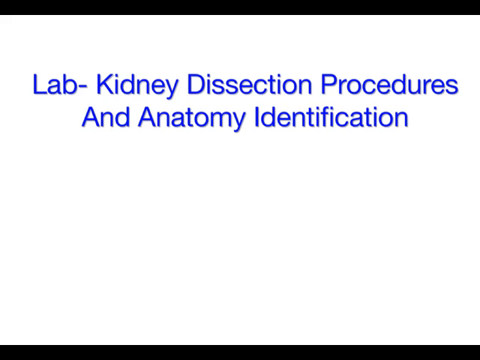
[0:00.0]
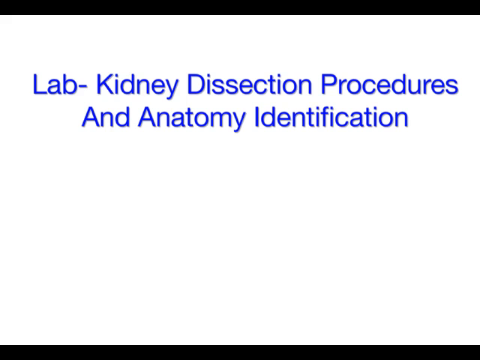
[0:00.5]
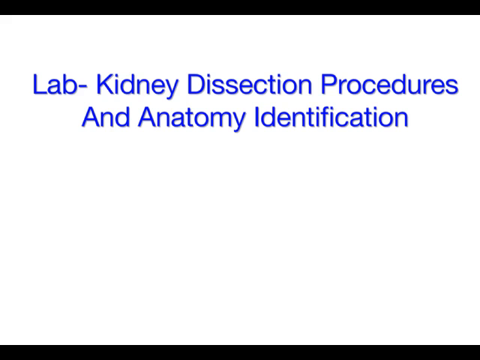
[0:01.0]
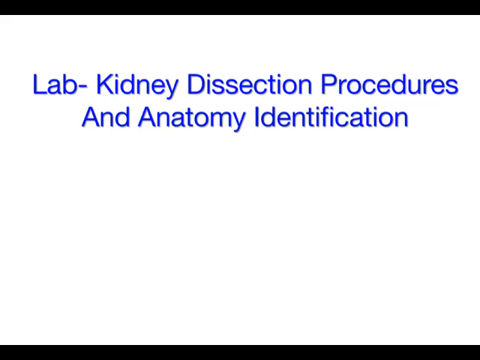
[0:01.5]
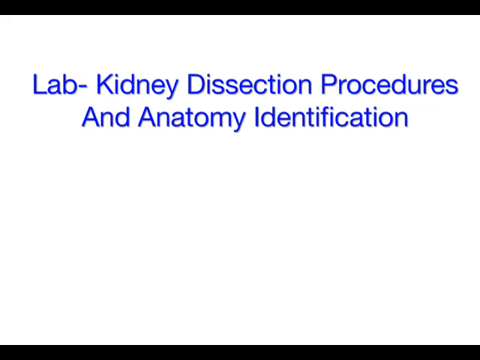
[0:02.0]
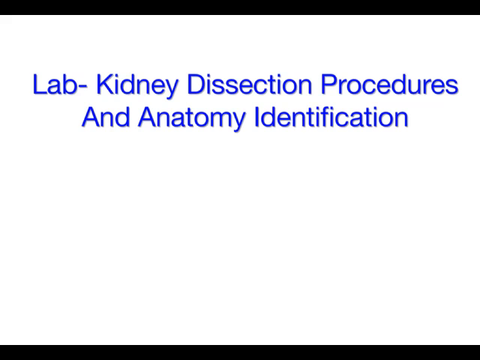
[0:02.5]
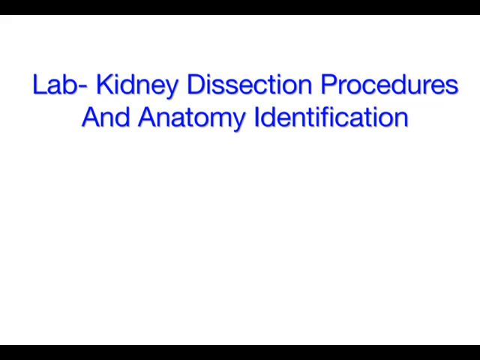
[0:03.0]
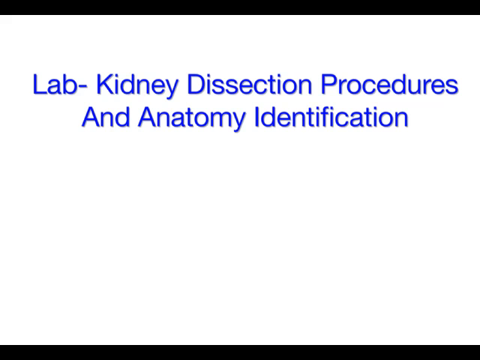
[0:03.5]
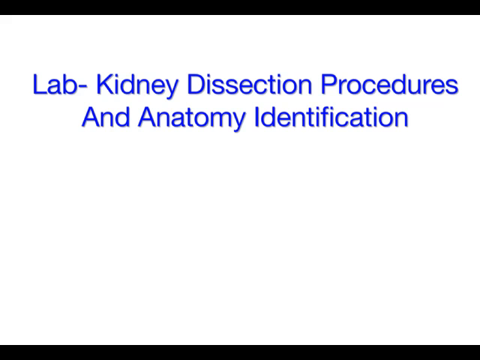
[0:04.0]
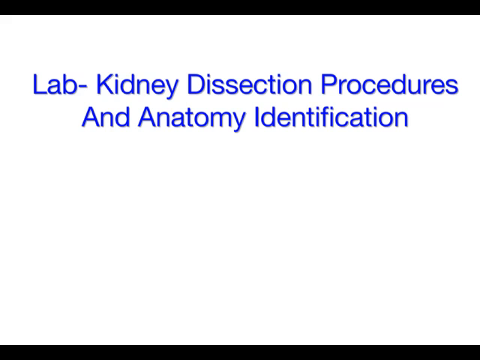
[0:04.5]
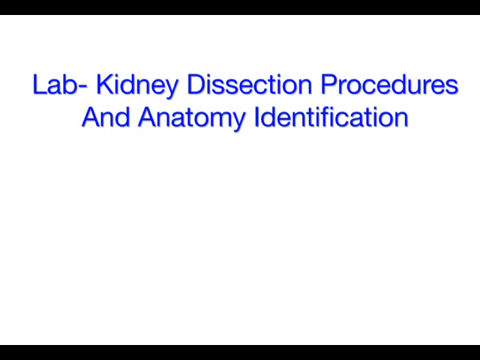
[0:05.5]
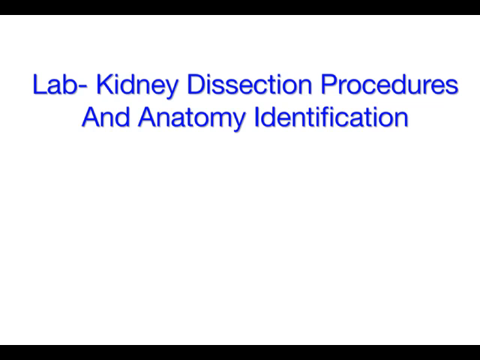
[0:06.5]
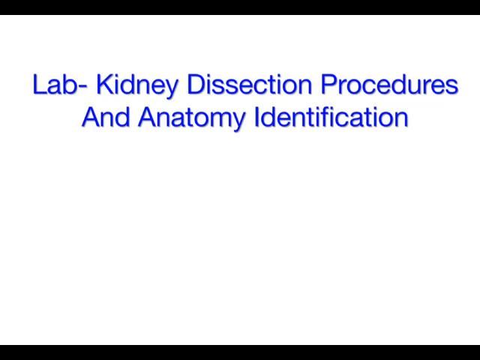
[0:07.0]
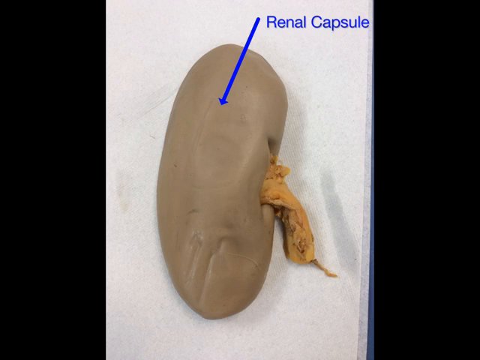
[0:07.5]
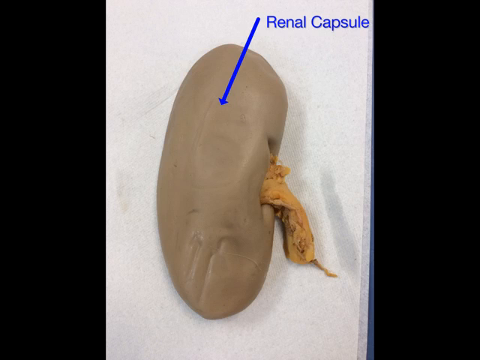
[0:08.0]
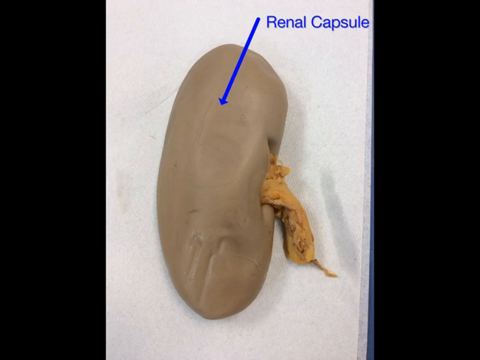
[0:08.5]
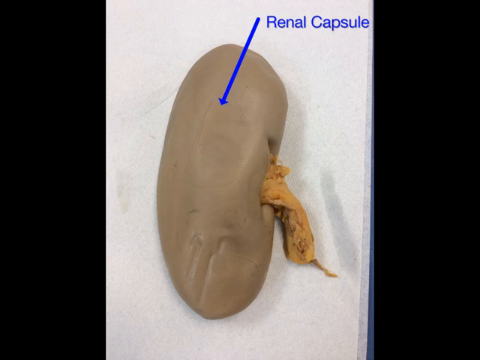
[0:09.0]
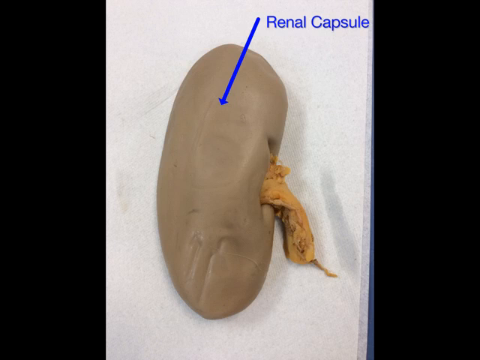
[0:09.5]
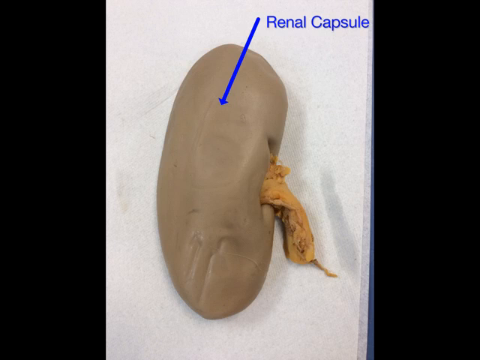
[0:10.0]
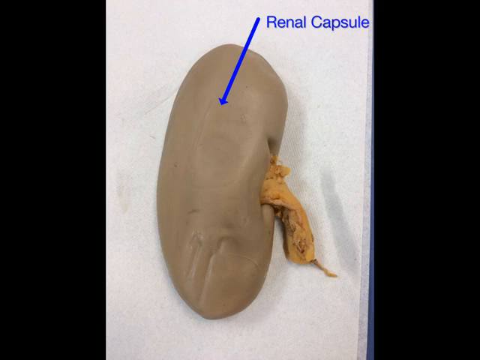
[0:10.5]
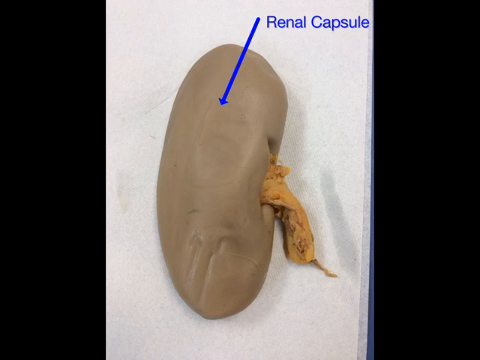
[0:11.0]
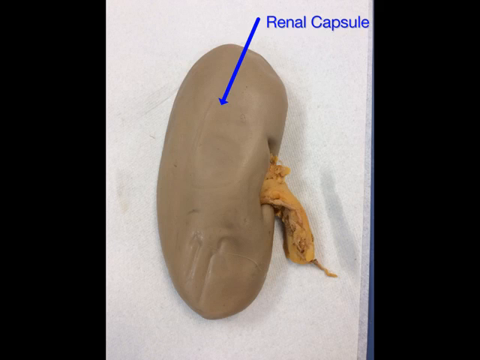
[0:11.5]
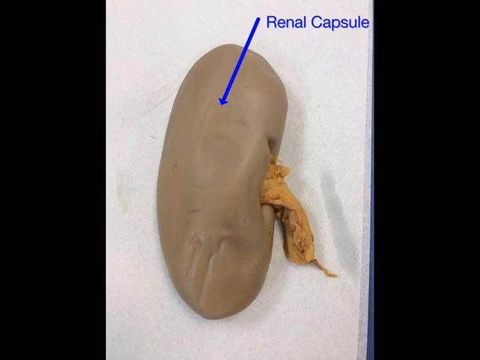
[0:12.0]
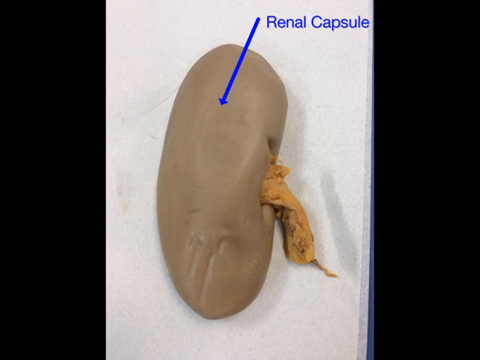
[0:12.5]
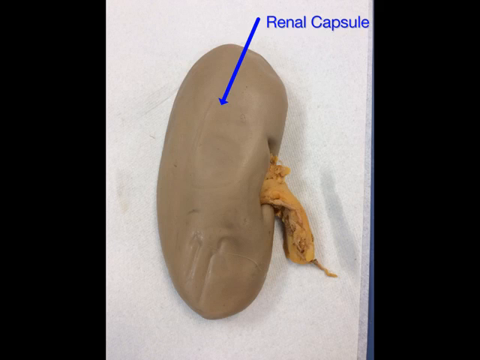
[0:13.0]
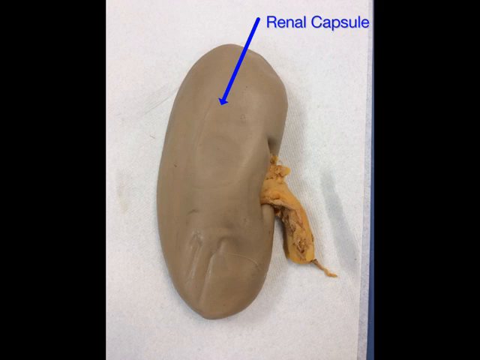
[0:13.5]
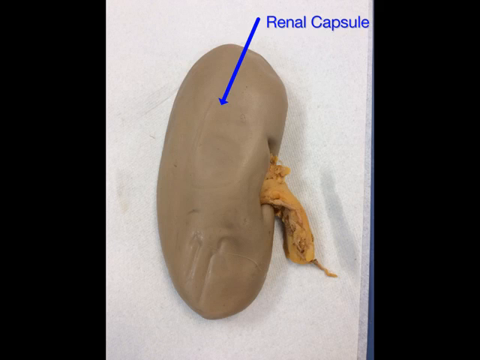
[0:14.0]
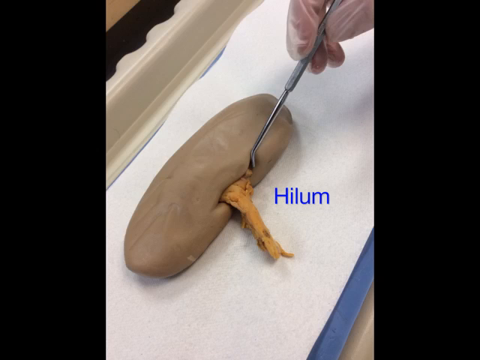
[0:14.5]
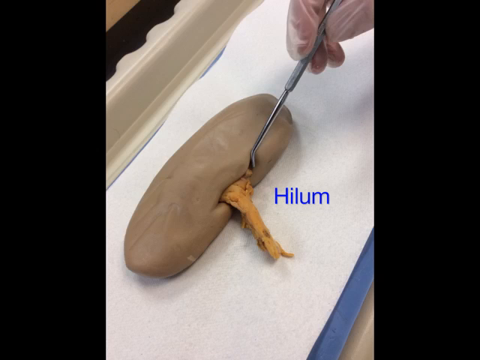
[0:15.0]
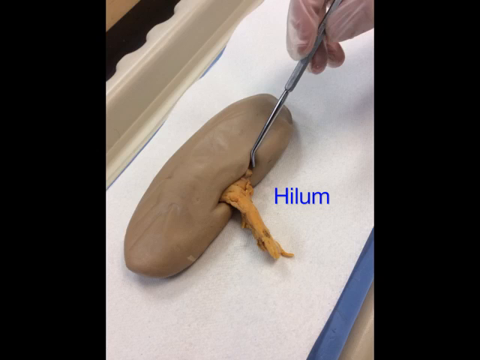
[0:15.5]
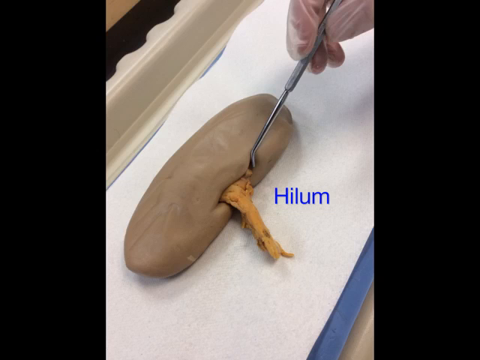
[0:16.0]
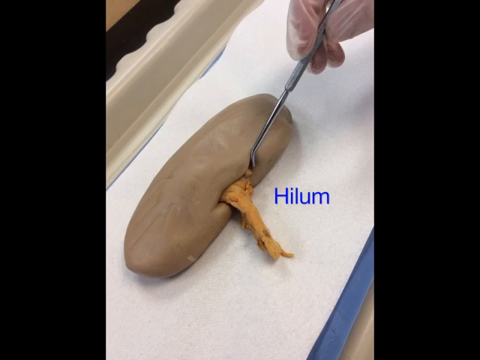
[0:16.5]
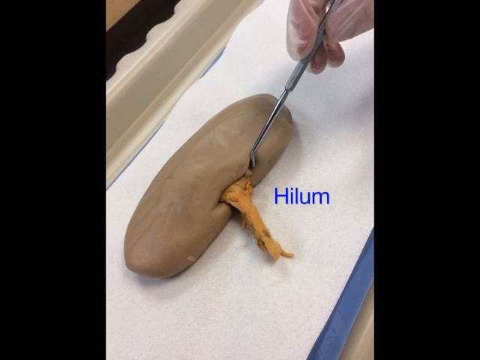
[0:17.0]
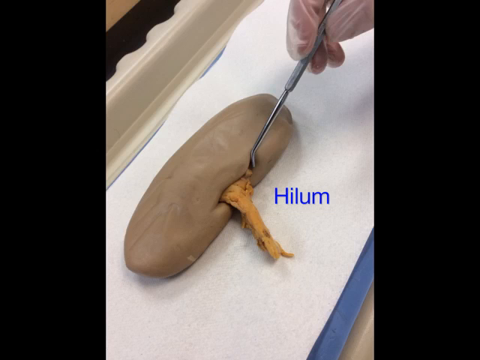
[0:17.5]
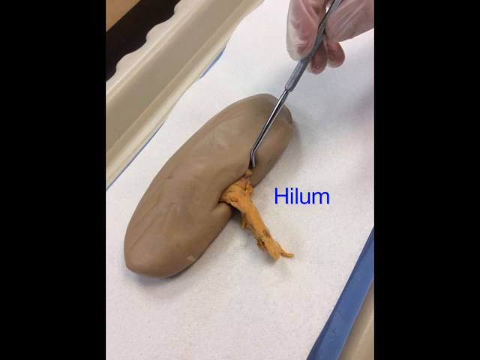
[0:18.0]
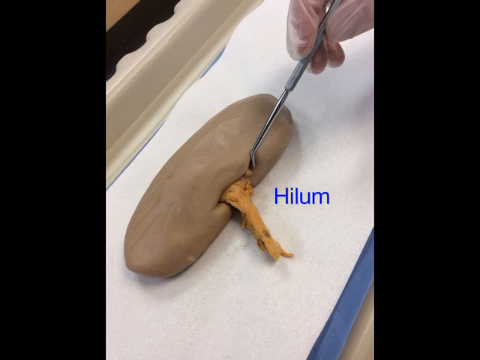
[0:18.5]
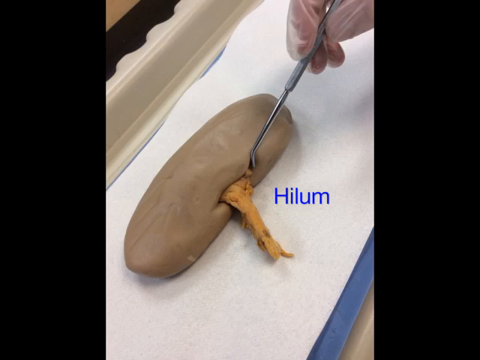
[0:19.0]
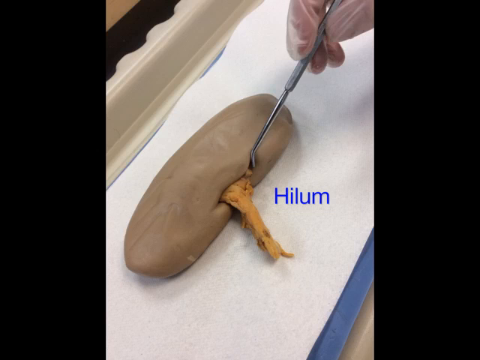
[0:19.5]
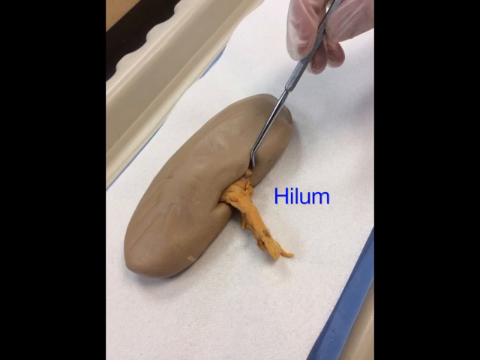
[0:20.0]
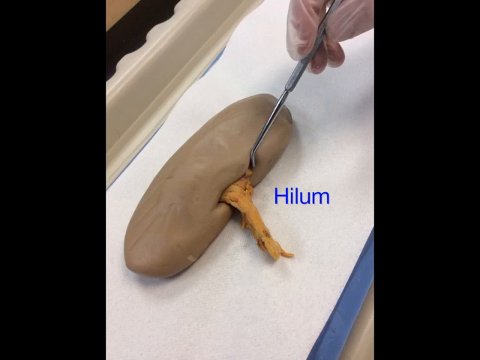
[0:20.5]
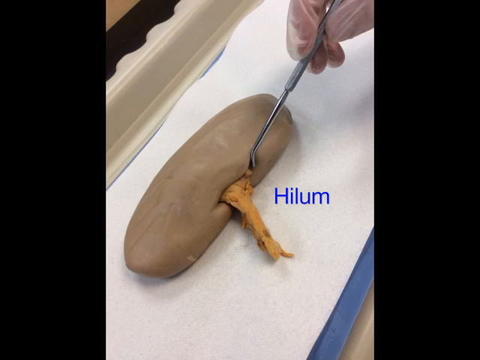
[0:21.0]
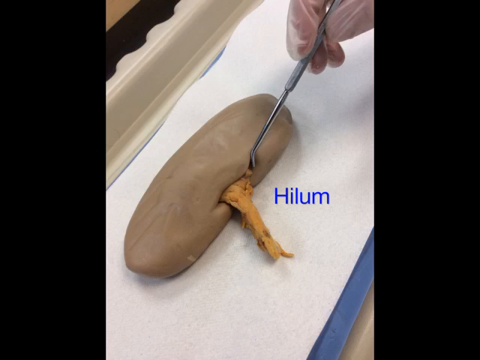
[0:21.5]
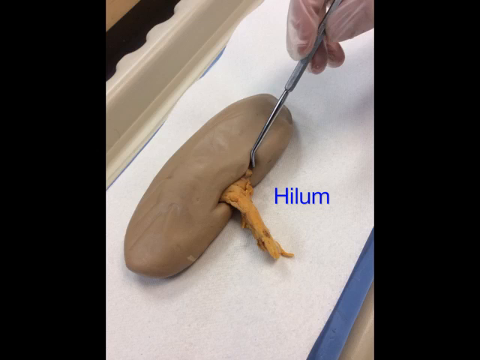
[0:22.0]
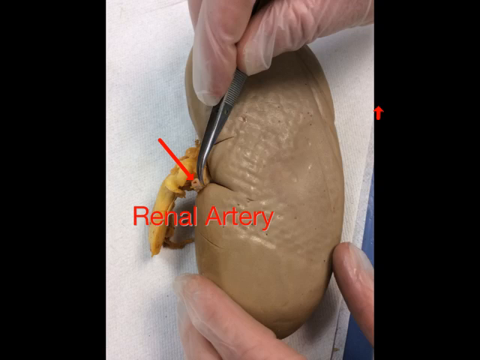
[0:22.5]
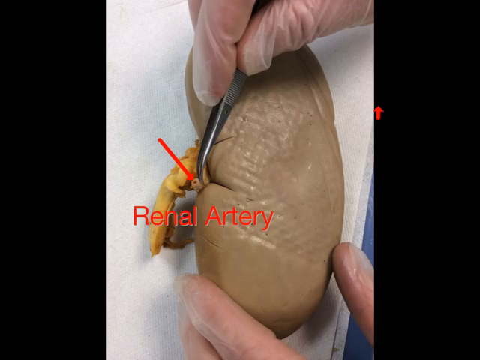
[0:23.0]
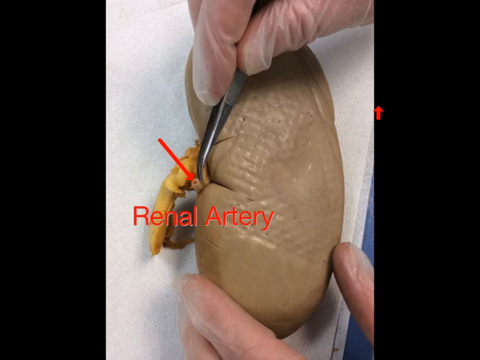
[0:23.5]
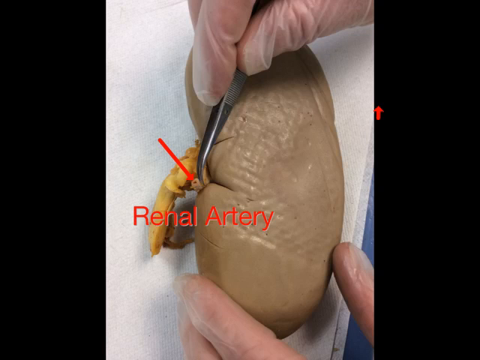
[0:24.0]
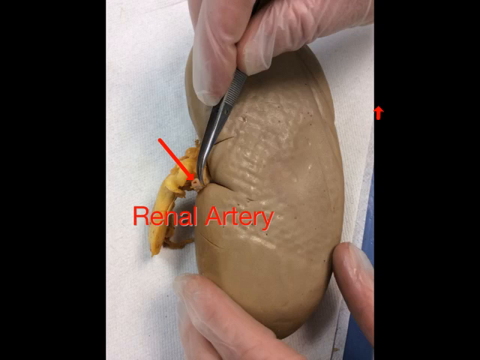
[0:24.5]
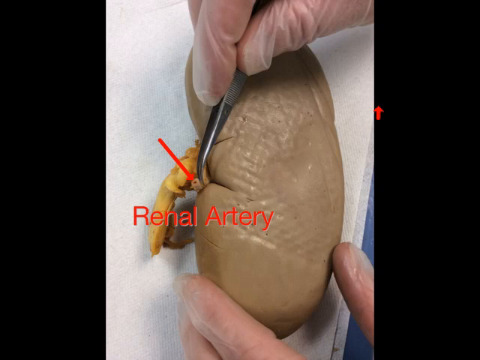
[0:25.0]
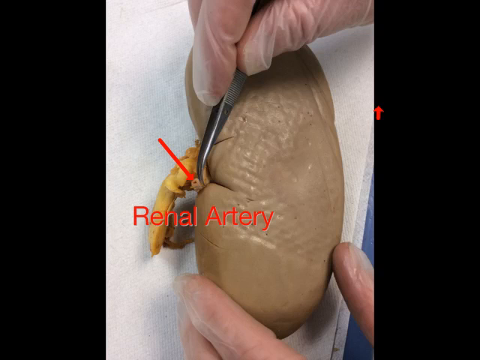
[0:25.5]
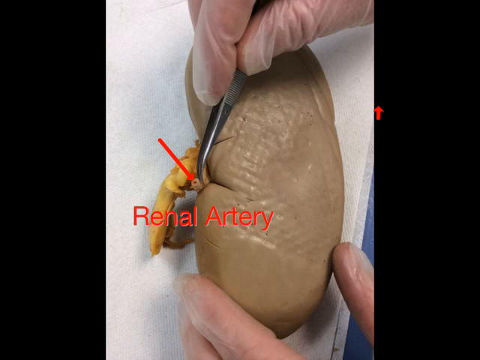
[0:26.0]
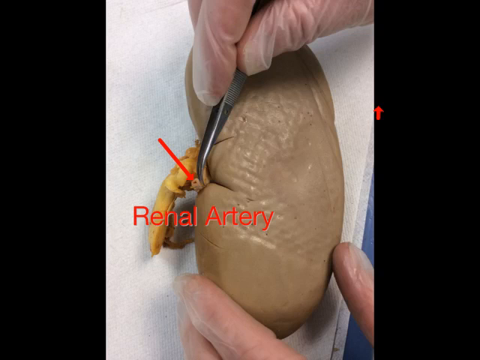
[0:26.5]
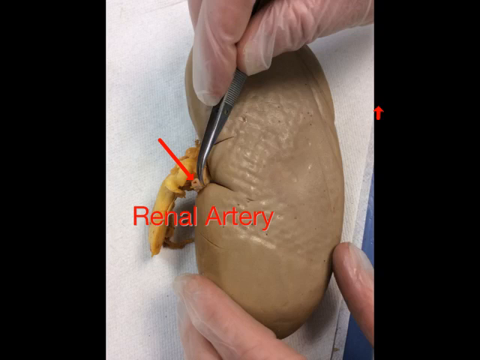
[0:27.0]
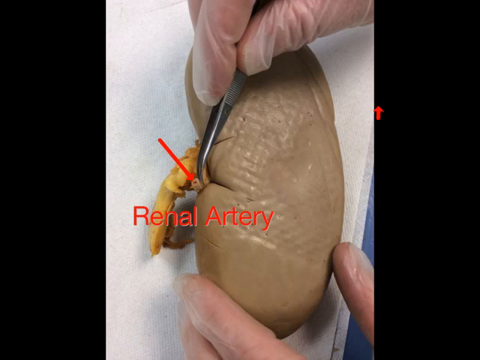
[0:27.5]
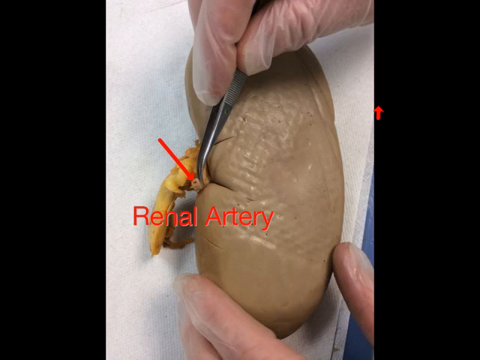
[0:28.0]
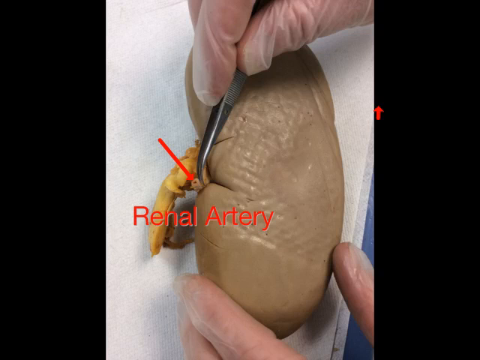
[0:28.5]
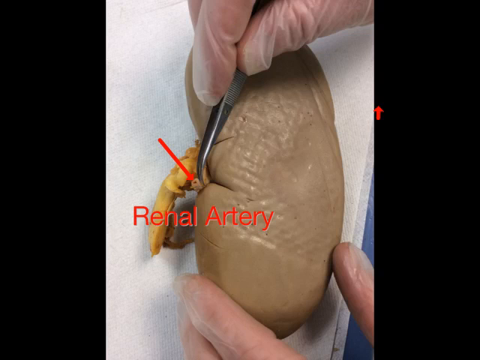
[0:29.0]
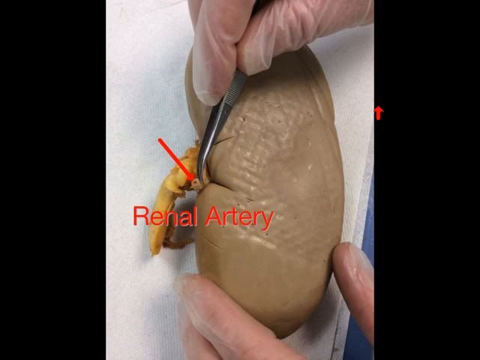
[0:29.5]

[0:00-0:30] On-screen text reads "lab kidney dissection procedures and anatomy identification." Next, a human kidney appears on screen. A blue arrow points down from the top of the screen to an area on the kidney, labeled as the renal capsule, which appears to be the main, outer part of the kidney. Another word then appears on screen, "hilum," apparently marking the part coming out of the kidney. The renal artery is shown next. A person is holding the human kidney, showing its different parts as the dissection procedure begins.